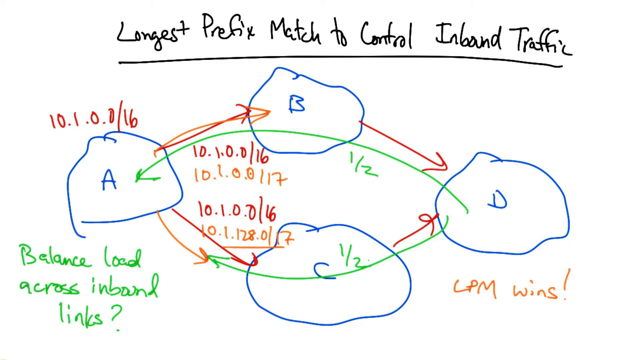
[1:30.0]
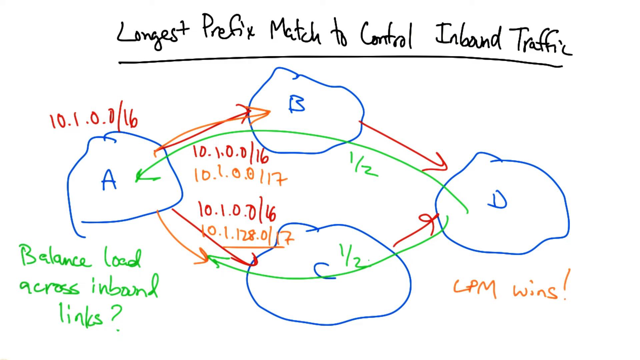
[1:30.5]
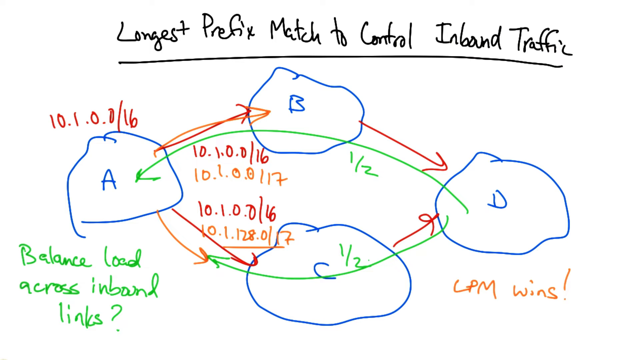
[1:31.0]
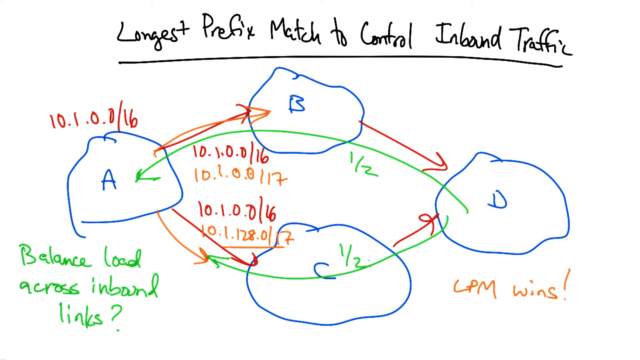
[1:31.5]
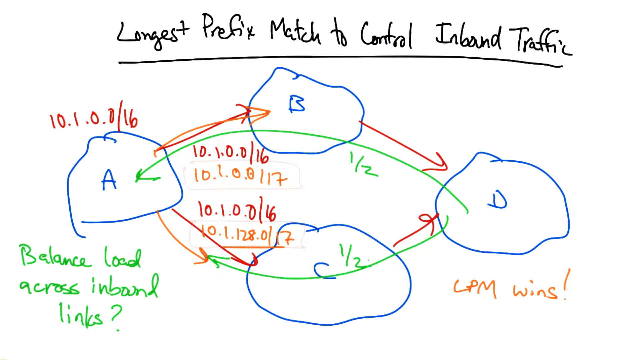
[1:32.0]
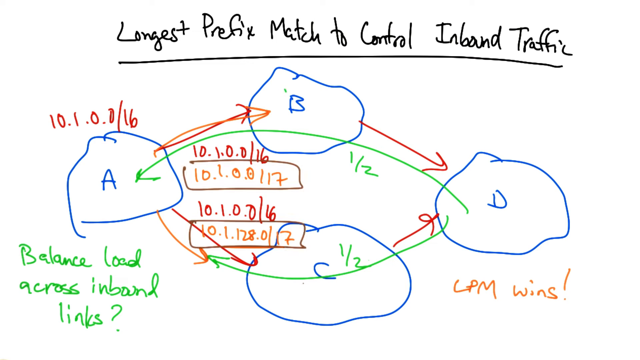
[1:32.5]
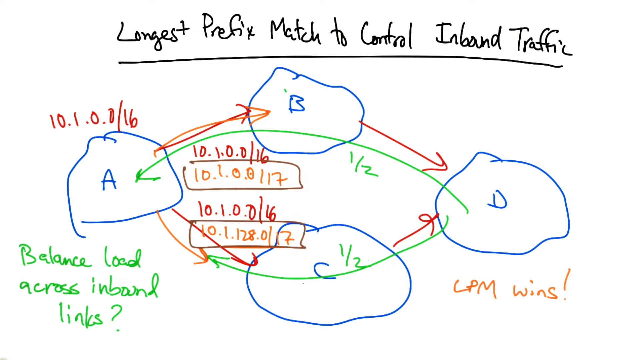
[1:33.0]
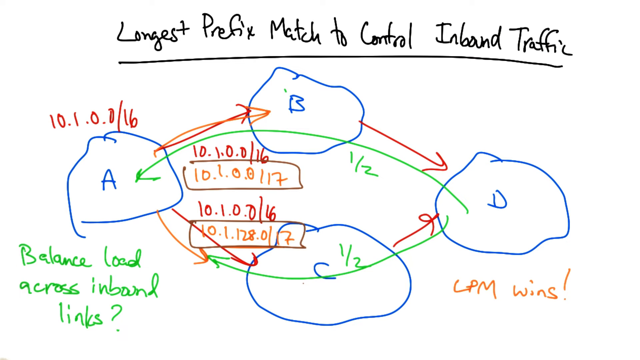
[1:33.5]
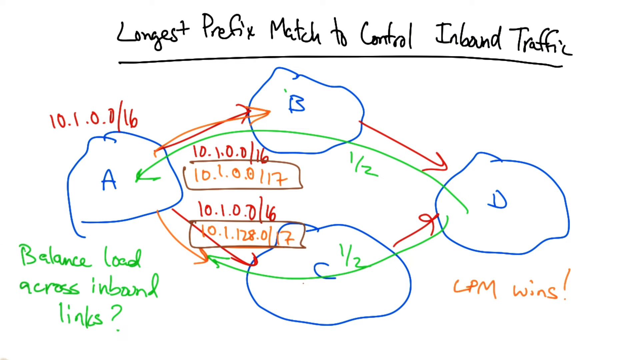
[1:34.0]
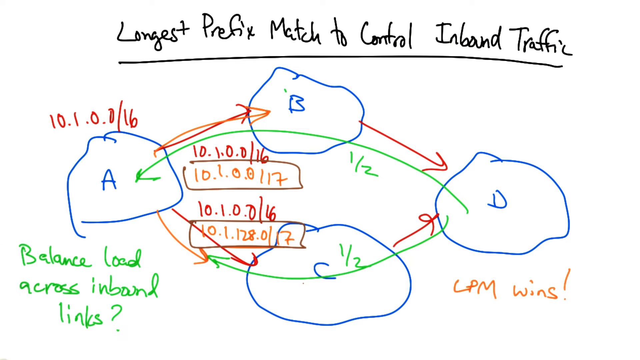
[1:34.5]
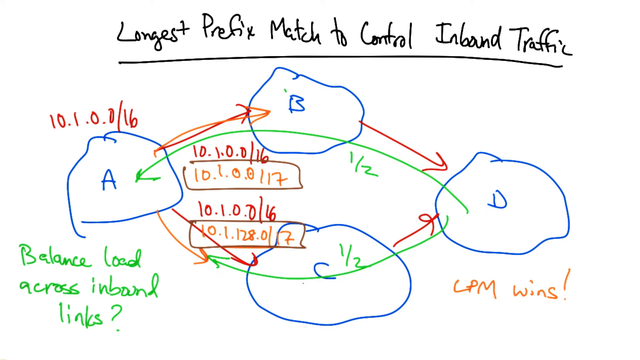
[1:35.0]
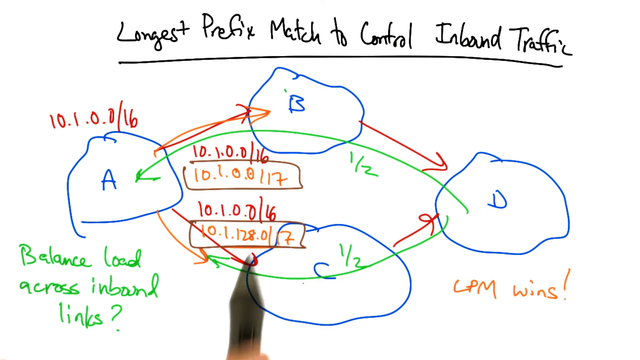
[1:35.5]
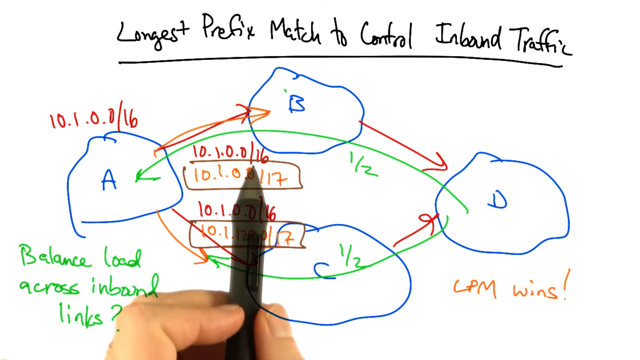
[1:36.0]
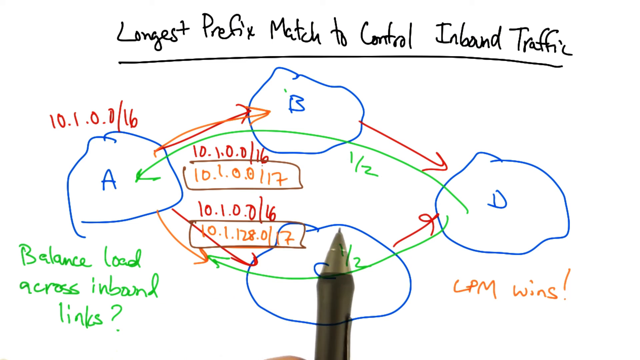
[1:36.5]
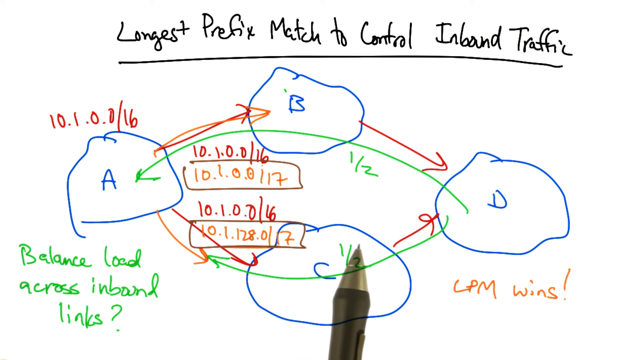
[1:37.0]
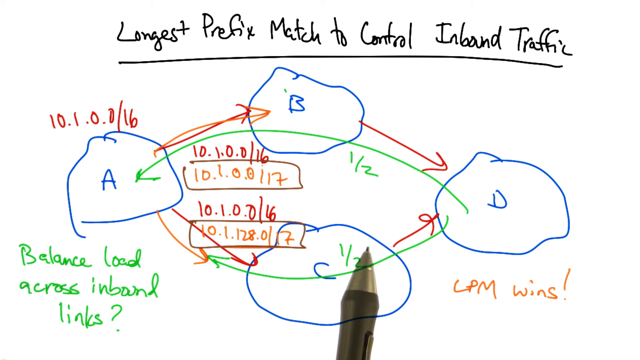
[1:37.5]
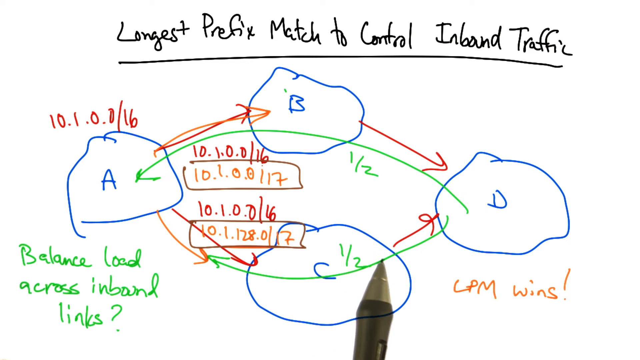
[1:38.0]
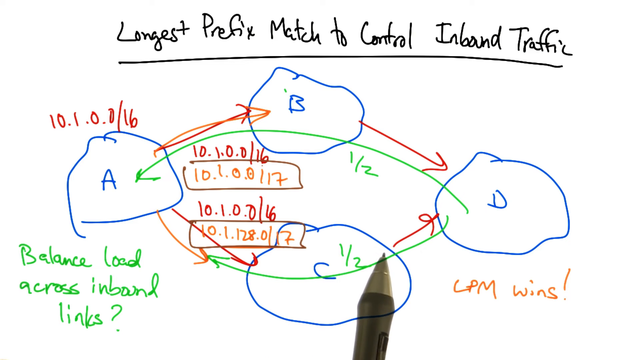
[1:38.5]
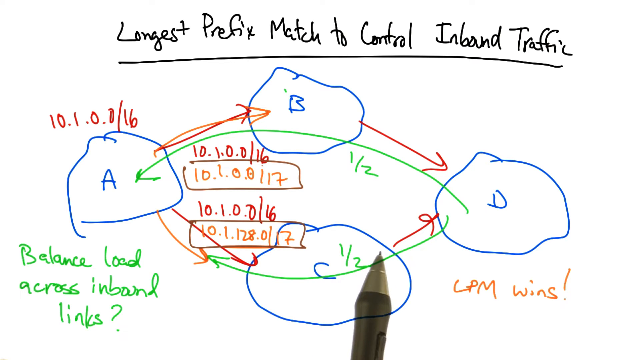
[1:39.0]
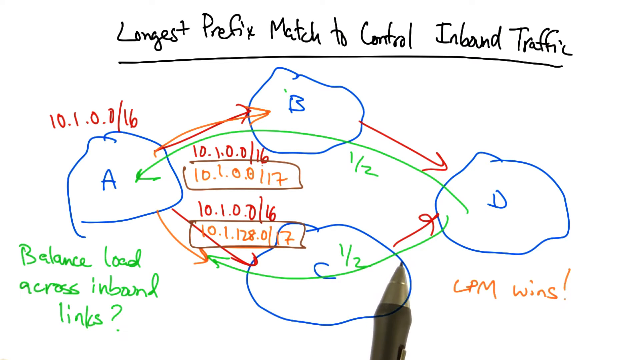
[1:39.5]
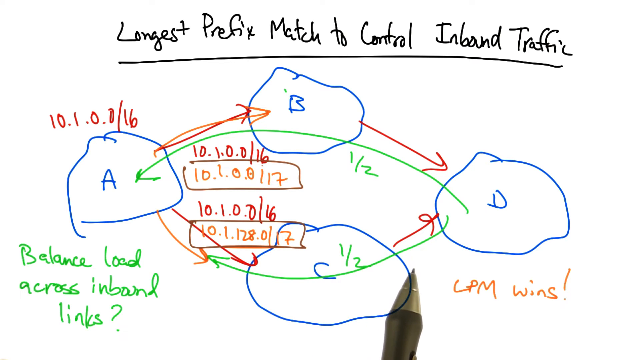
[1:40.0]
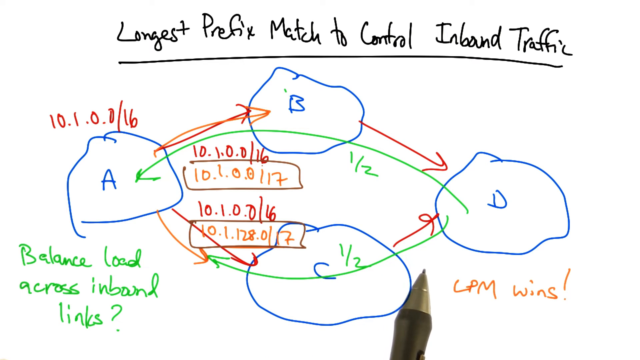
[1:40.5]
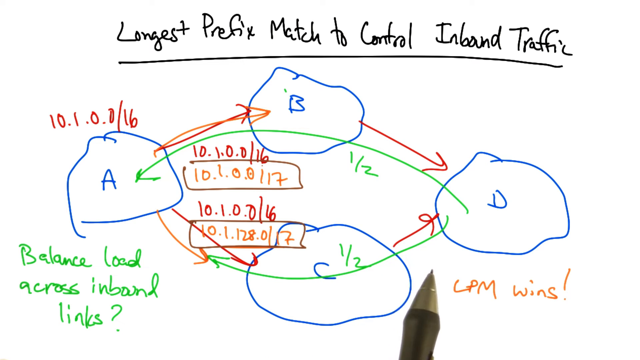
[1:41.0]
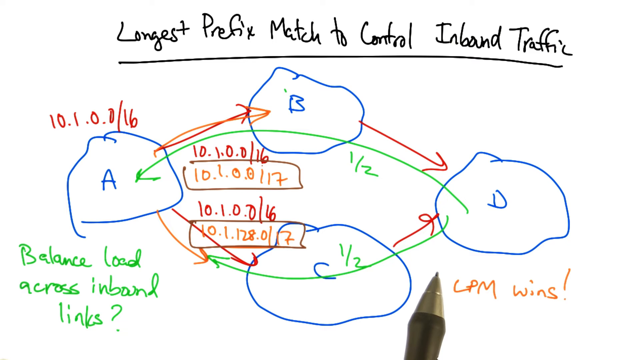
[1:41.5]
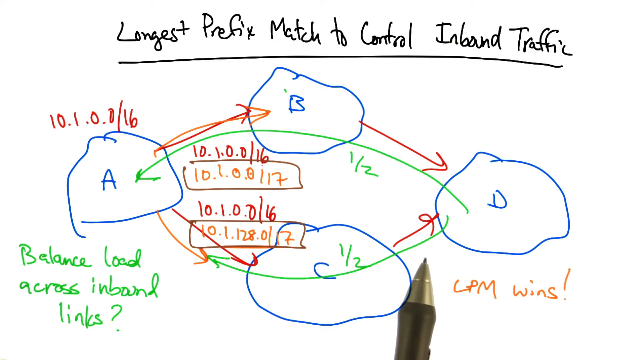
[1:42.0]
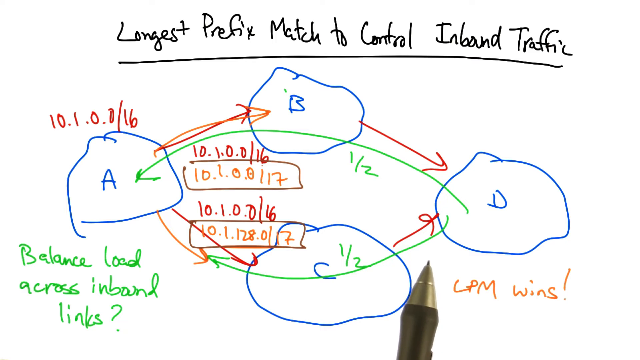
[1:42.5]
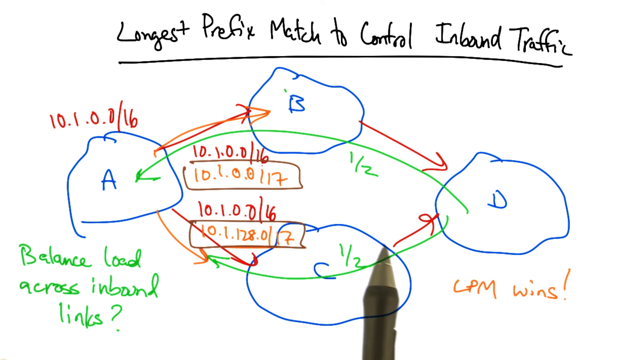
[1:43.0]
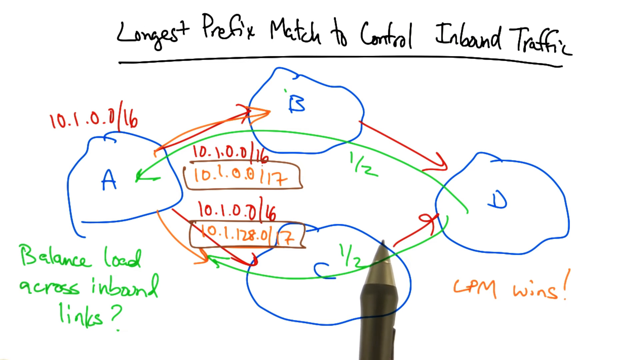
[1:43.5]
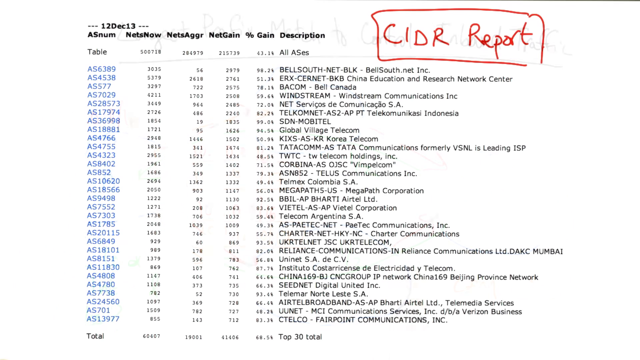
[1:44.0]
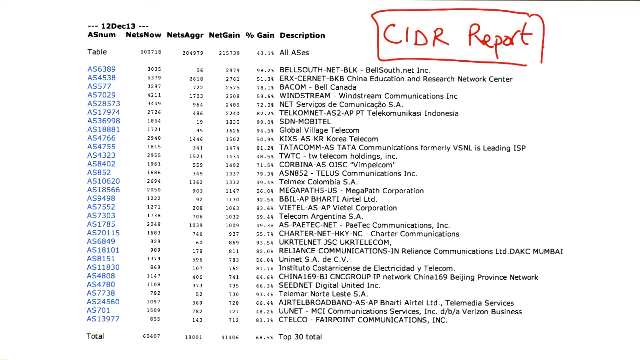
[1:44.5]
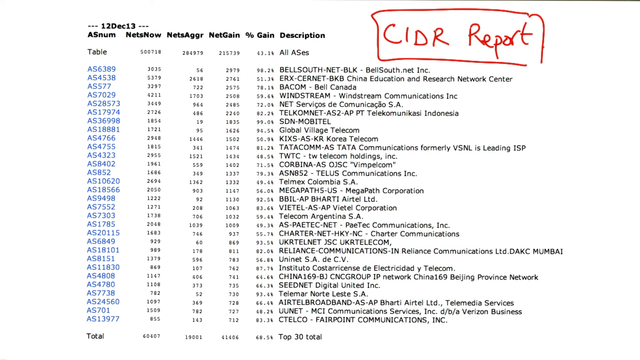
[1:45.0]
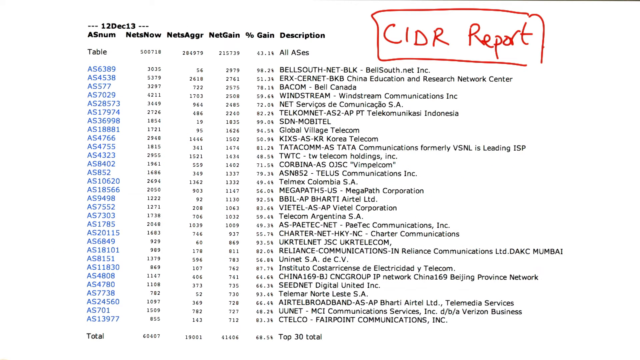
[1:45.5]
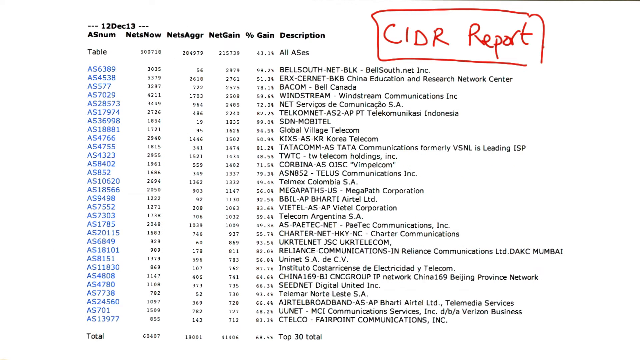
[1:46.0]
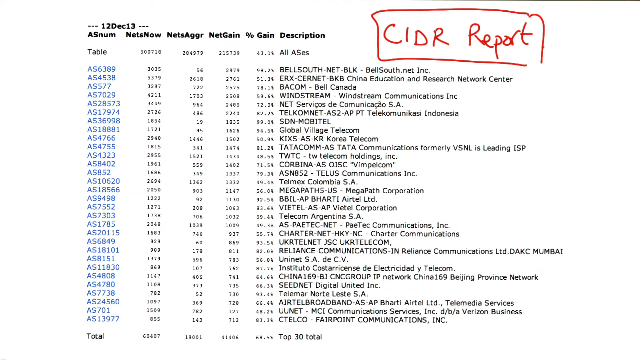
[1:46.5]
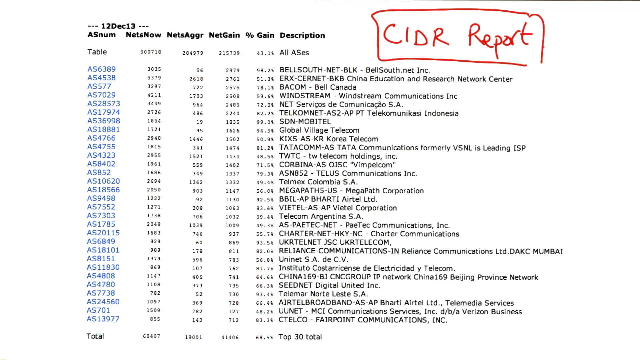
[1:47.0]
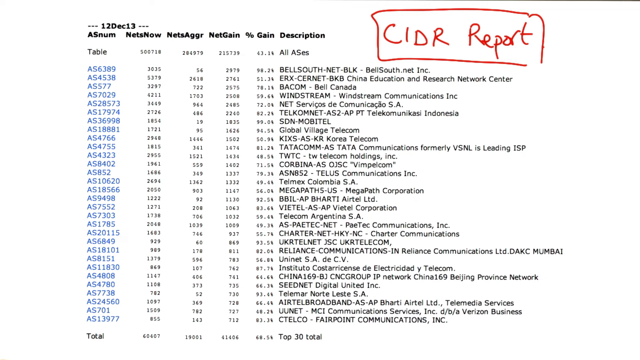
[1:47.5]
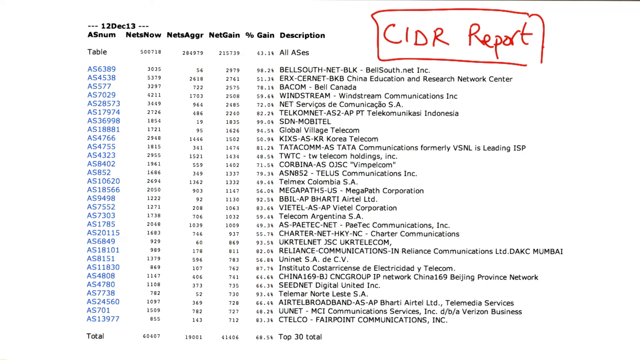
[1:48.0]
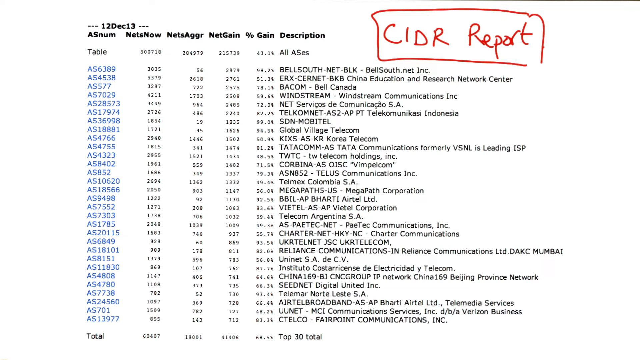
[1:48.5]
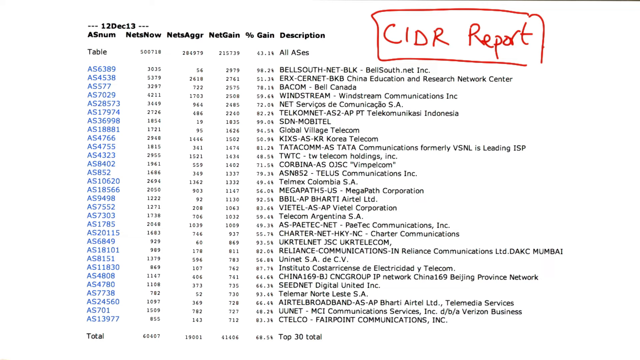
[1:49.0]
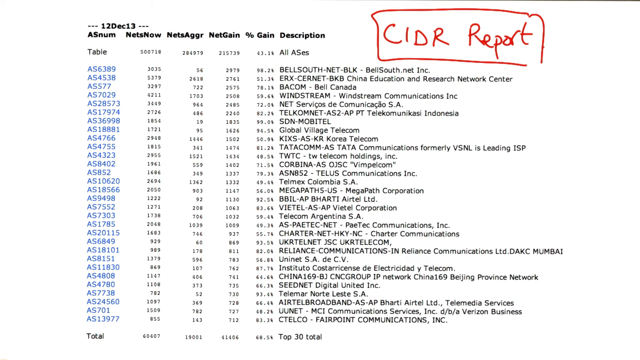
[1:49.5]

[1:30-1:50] Orange squares are drawn connecting A to B and A to C, and a red rectangle is drawn around them. The pen points at the boxed numbers connecting A to B, then moves down to above C, moving around its edge as if thinking about what to add next. The scene then switches to a white background with columns headed "ASNUM," "NETSNOW," "NETSAGGR," "NETGAIN," "PERCENTAGEGAIN" and "DESCRIPTION." Above them on the left it says "12, December 13." On the right side a big red rectangle is drawn in, containing "CIDR REPORT." Below the column headers is "TABLE" followed by "500718," "284979," "2157836" and "43.16," then "all ASES," with a great deal of information below that. A total is at the bottom, with information to its right that lines up with the columns above.